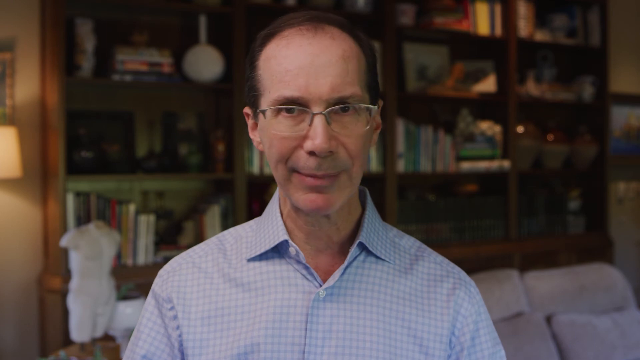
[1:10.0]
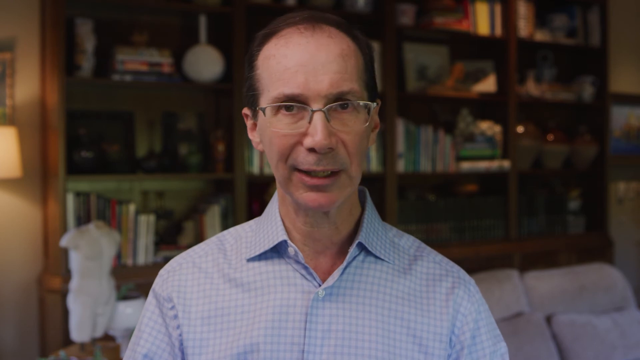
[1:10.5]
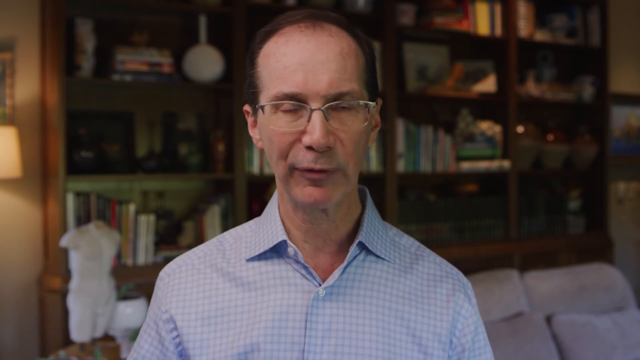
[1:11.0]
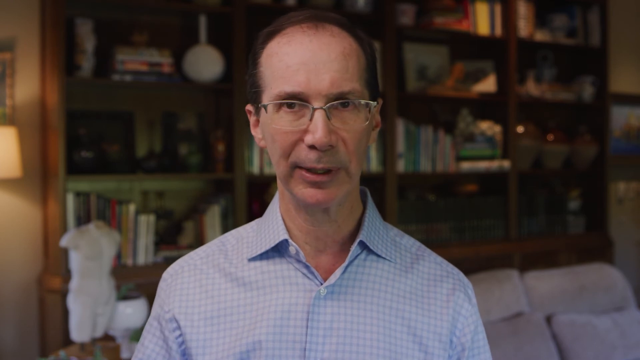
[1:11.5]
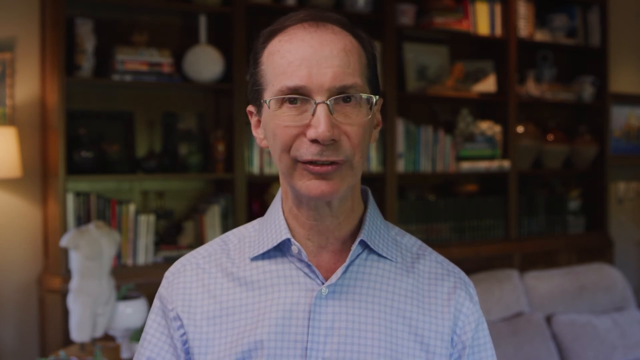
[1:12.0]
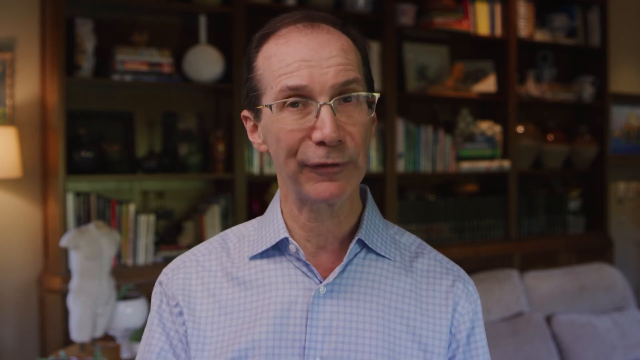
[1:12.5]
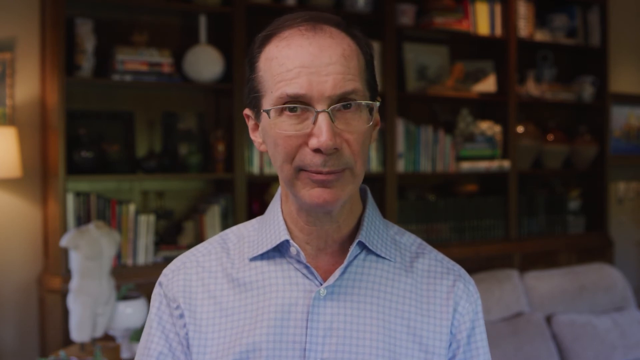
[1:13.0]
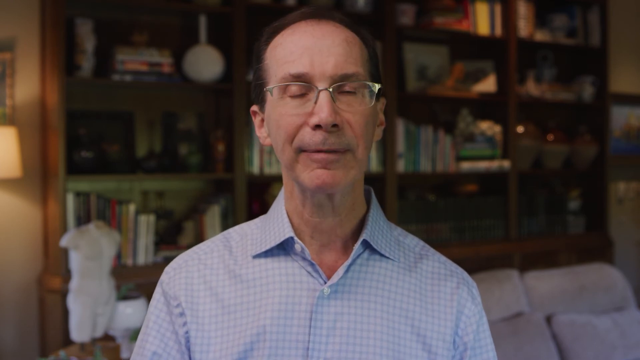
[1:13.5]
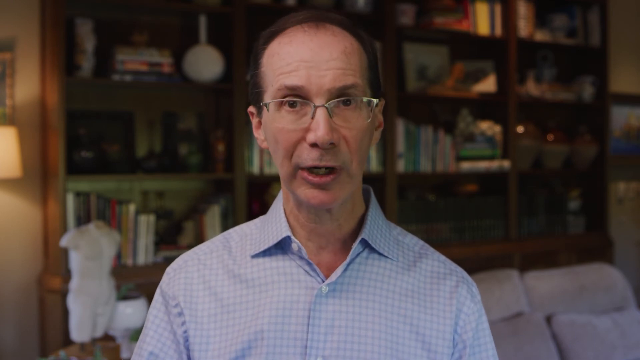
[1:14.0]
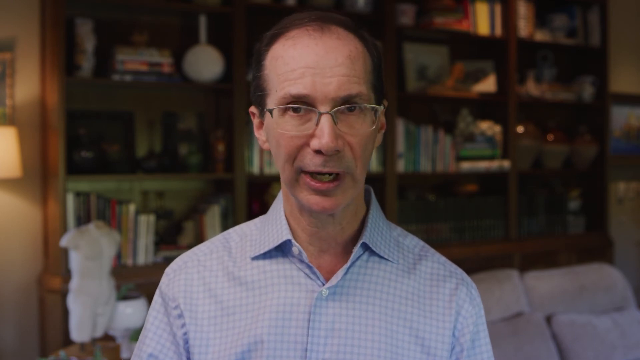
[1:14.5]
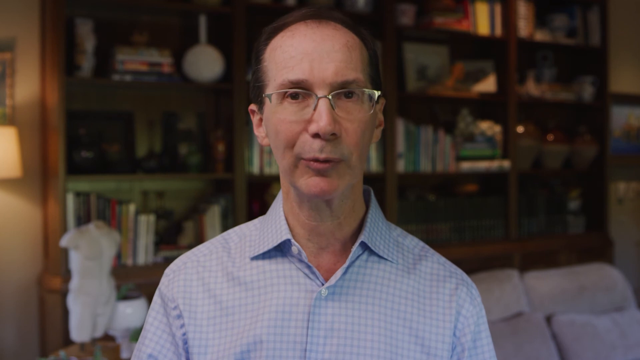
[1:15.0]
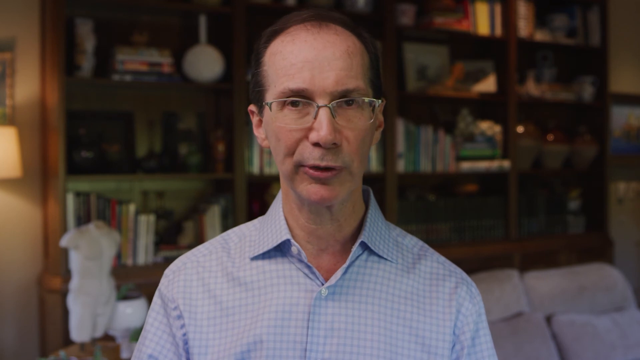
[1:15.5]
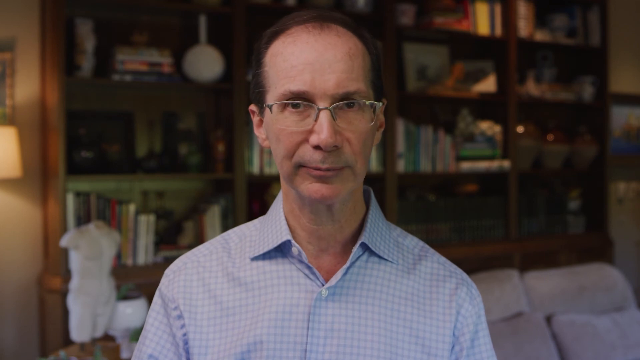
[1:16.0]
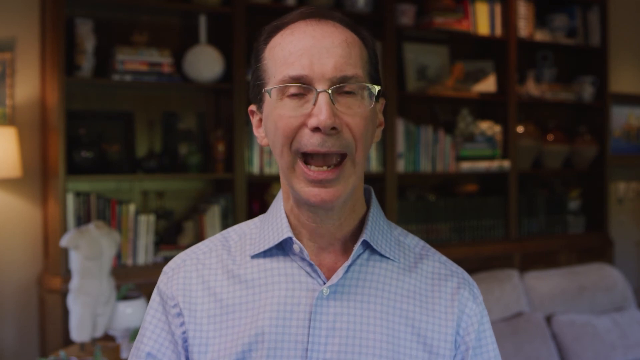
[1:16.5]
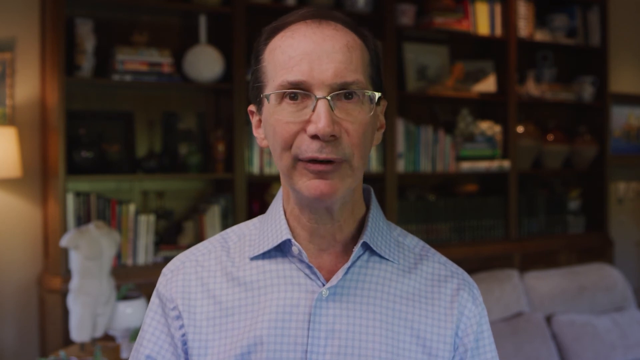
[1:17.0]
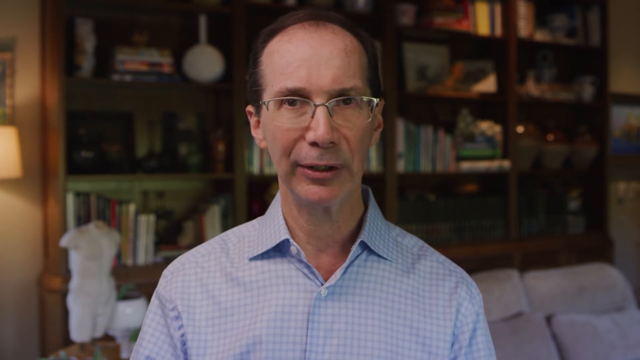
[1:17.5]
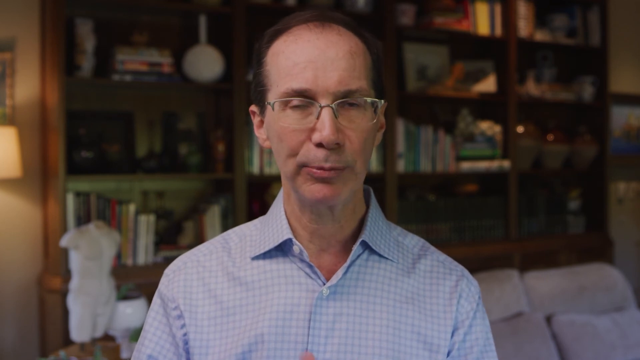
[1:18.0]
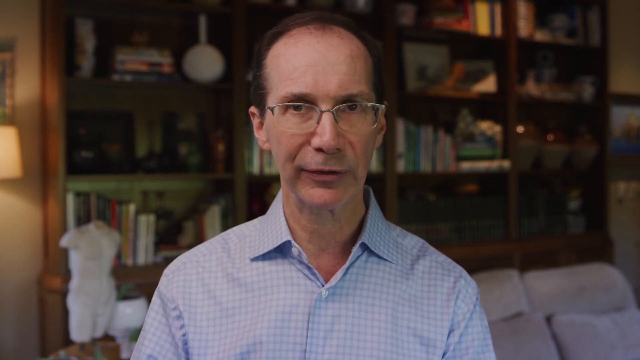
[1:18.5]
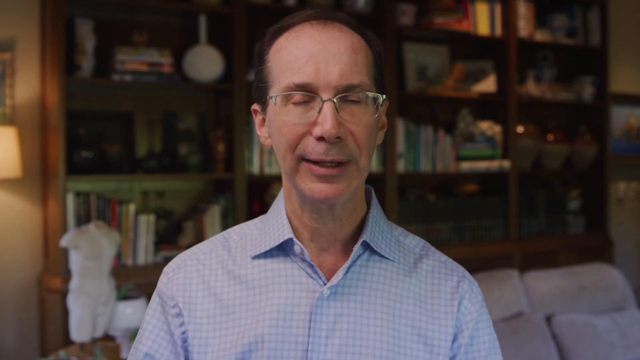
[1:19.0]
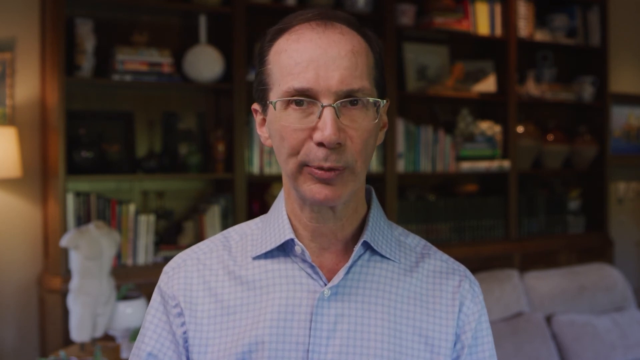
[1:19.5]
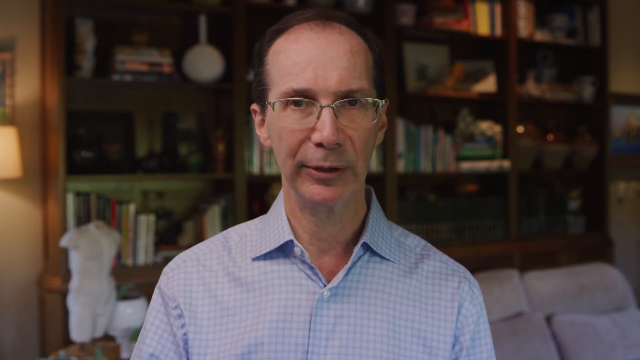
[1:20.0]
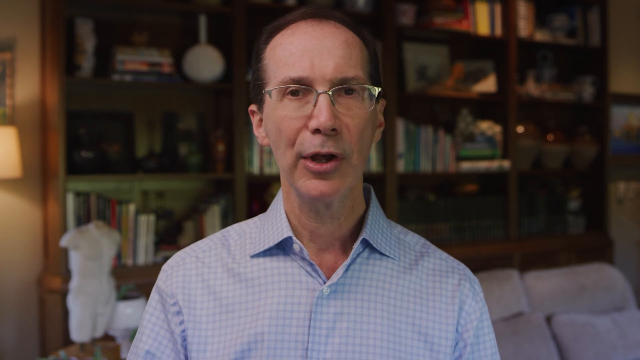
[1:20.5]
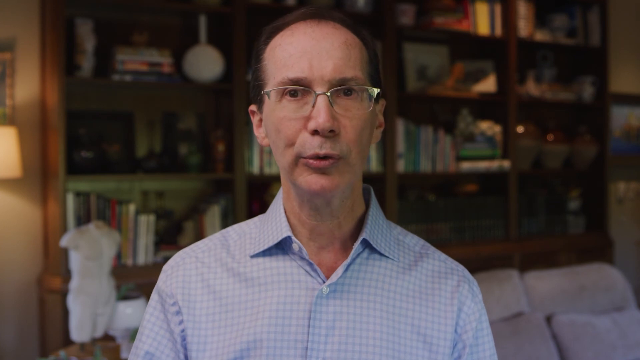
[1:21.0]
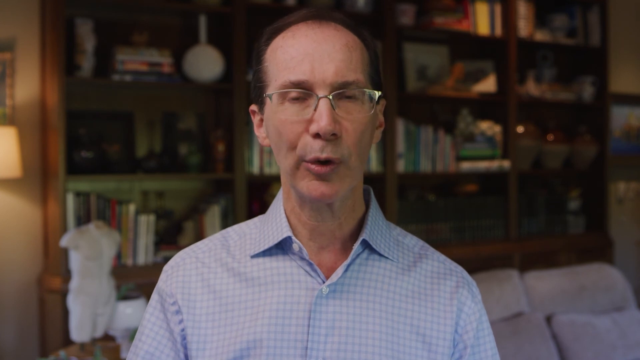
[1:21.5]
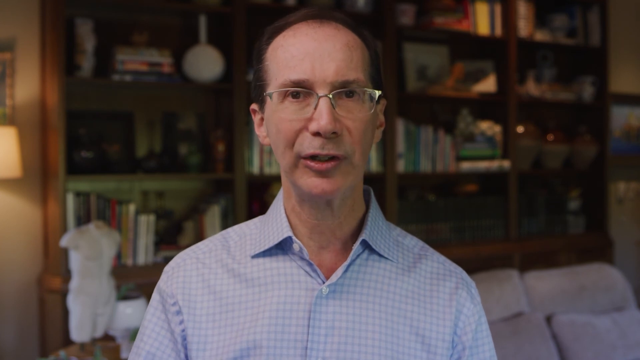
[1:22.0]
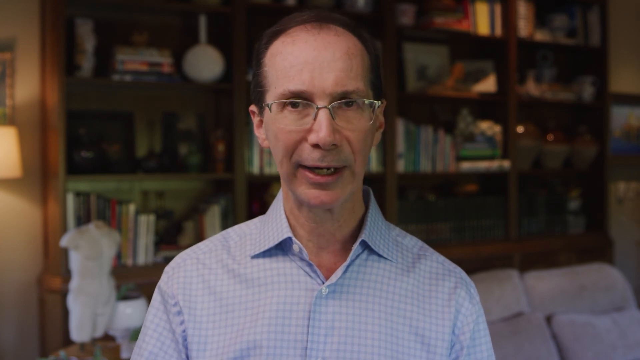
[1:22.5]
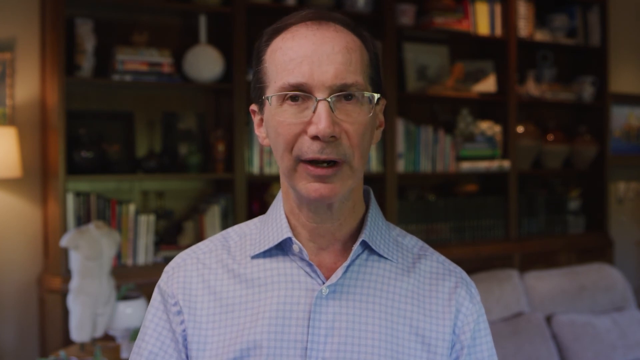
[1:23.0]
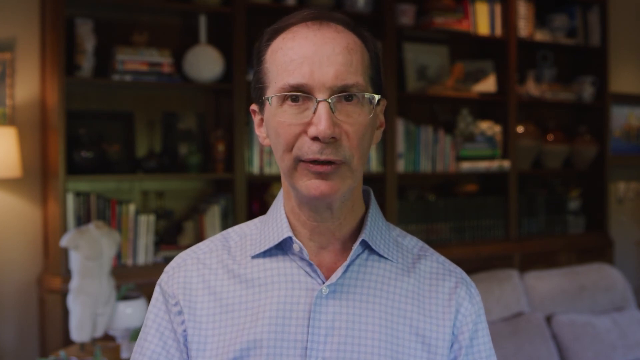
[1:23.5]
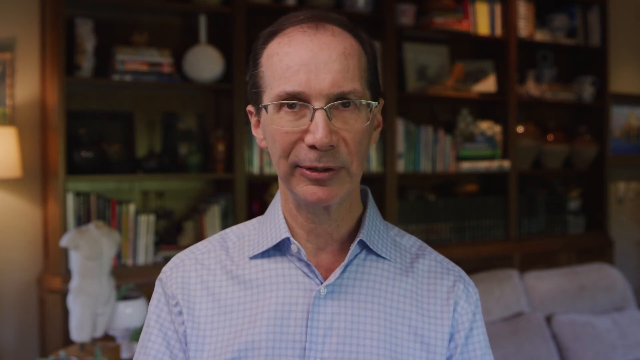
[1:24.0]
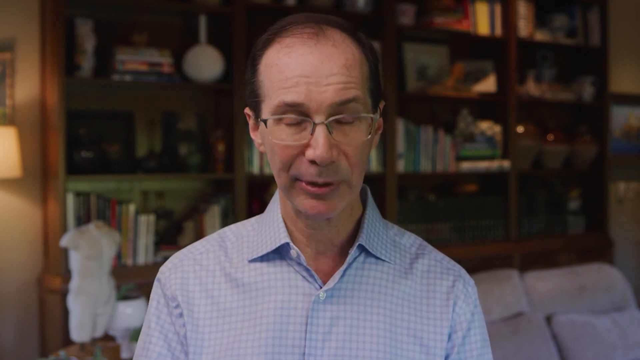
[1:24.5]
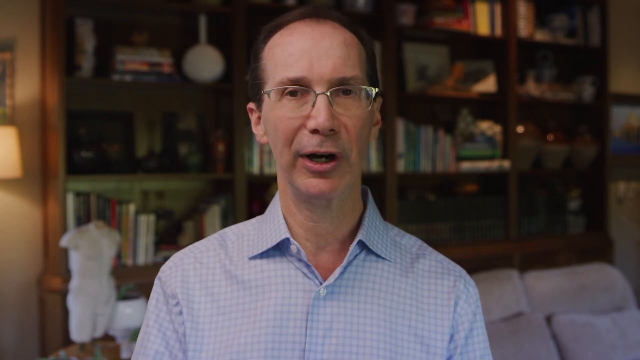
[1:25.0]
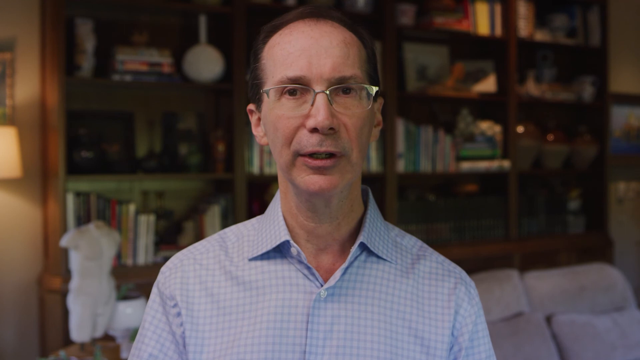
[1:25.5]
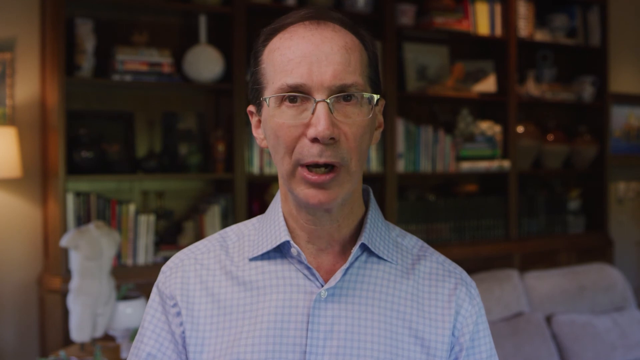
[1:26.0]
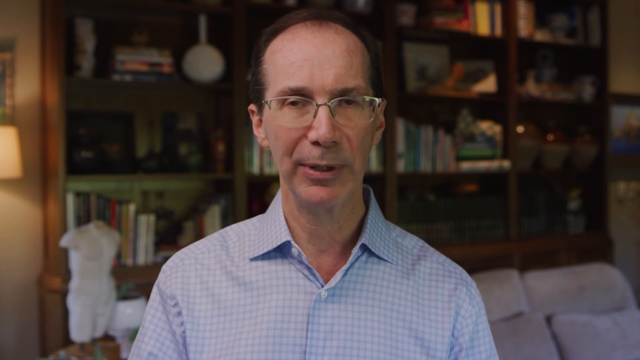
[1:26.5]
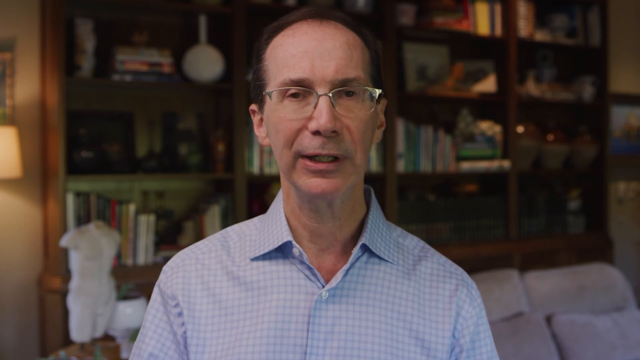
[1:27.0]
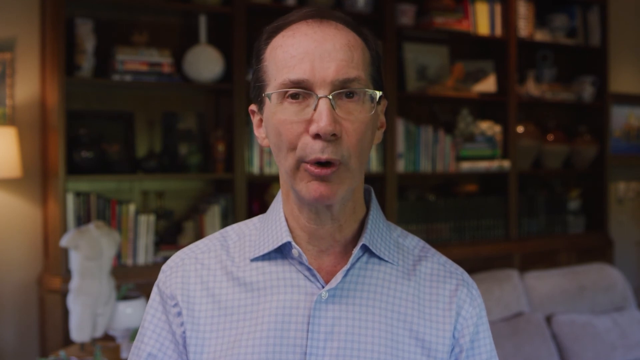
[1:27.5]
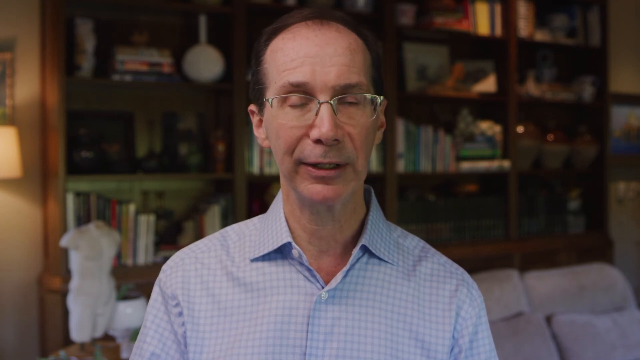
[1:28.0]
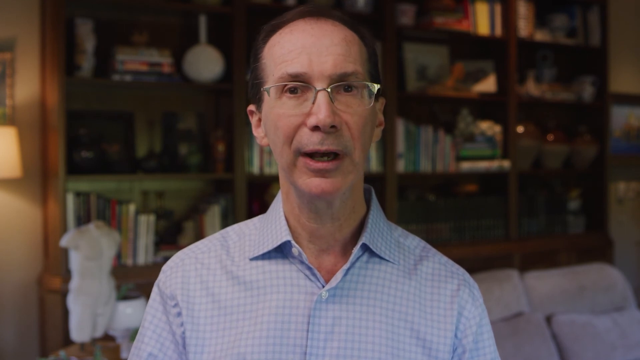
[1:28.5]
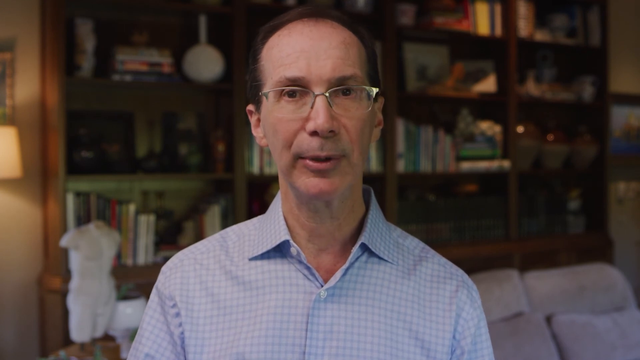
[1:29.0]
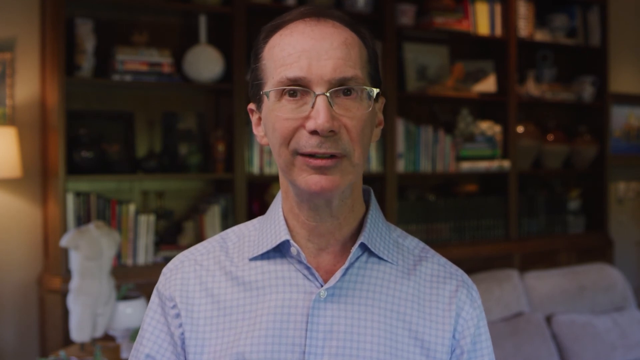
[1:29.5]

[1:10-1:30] The man, sitting down, looks directly into the camera and talks the entire time. He appears to be 55 to 60 years old, wears eyeglasses and a blue and white dress shirt, and has brown hair. In the background is a wood-grain bookcase with shelves holding books and various other items. To the left is a cut-off partial image of some sort of lighting, possibly a table lamp.